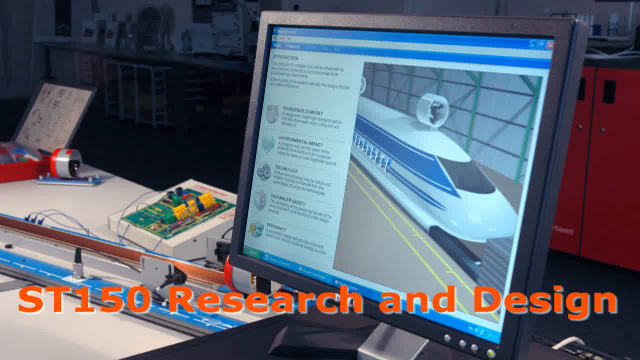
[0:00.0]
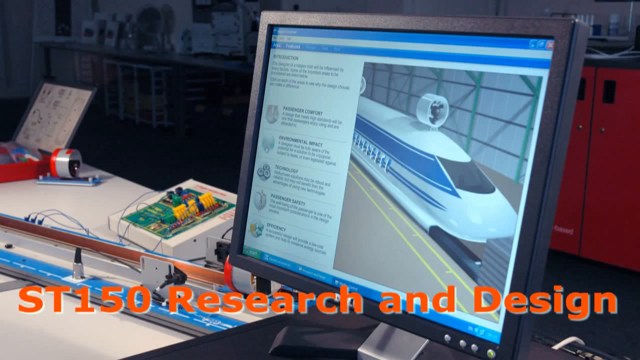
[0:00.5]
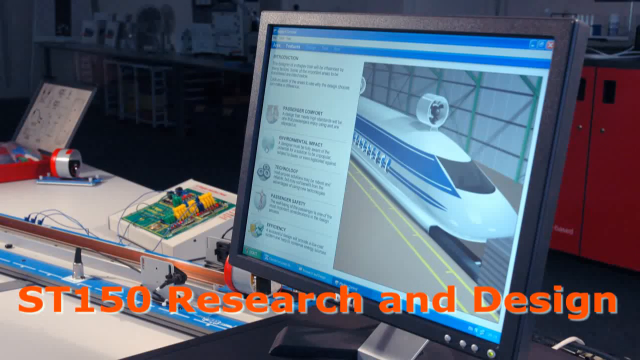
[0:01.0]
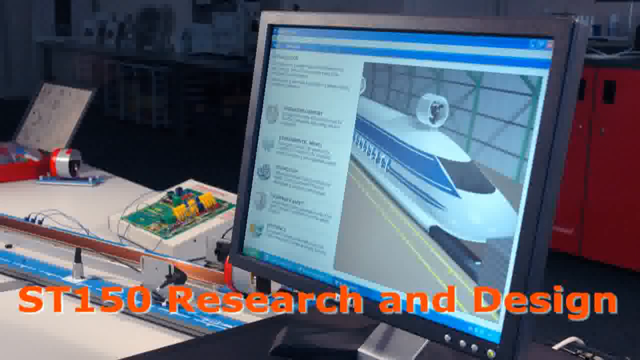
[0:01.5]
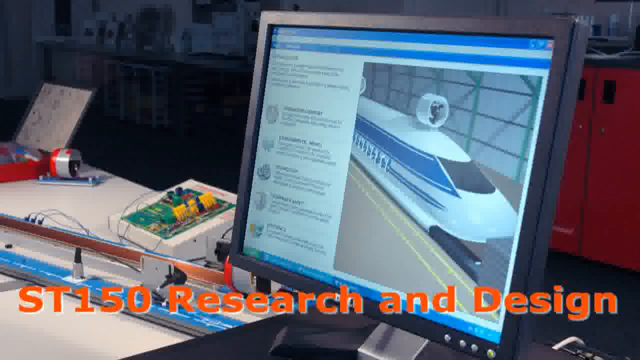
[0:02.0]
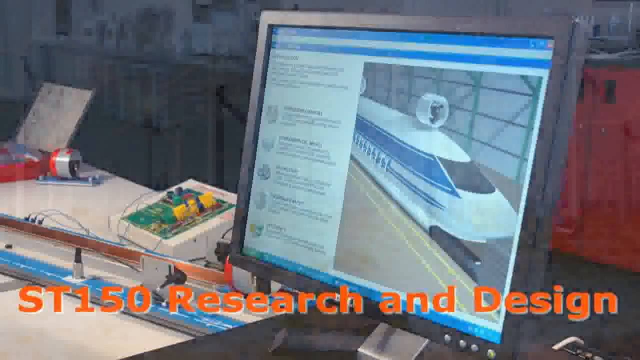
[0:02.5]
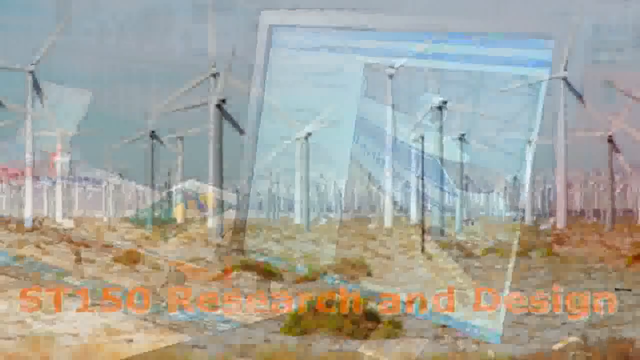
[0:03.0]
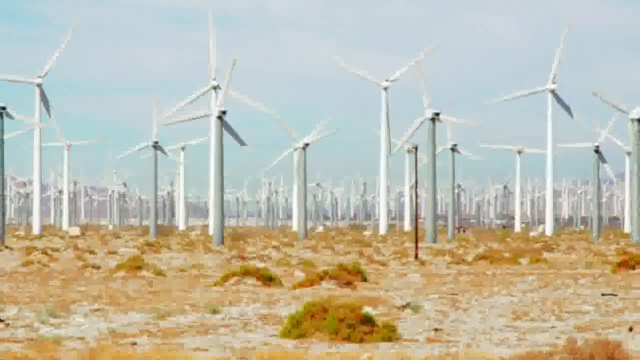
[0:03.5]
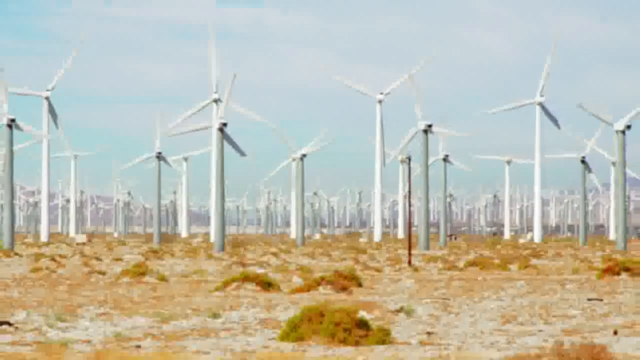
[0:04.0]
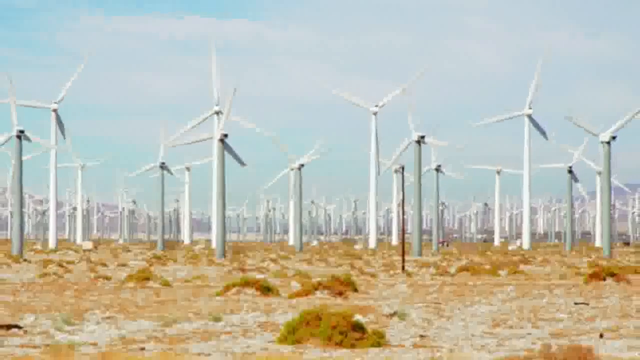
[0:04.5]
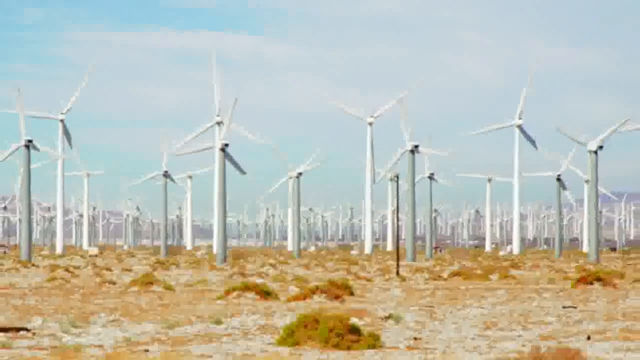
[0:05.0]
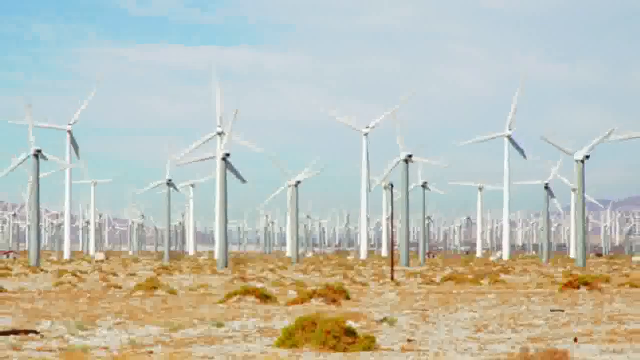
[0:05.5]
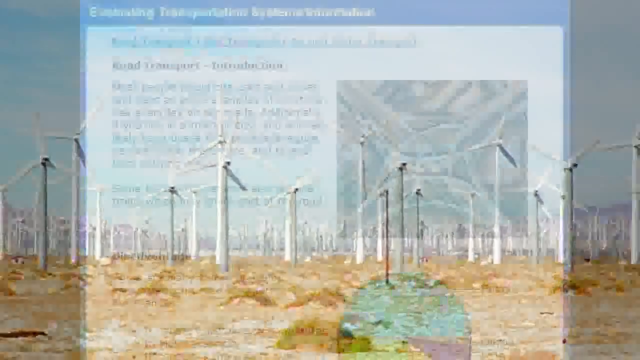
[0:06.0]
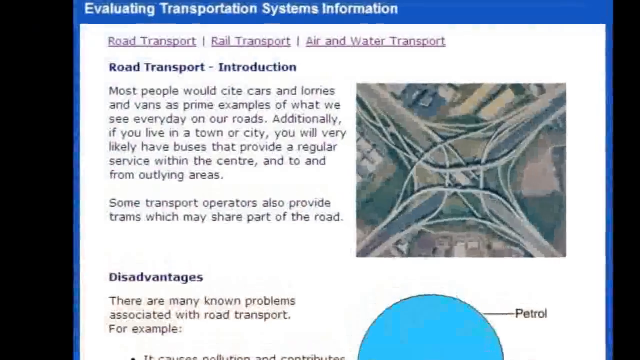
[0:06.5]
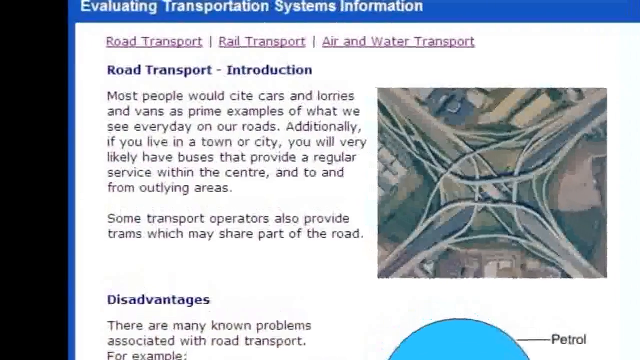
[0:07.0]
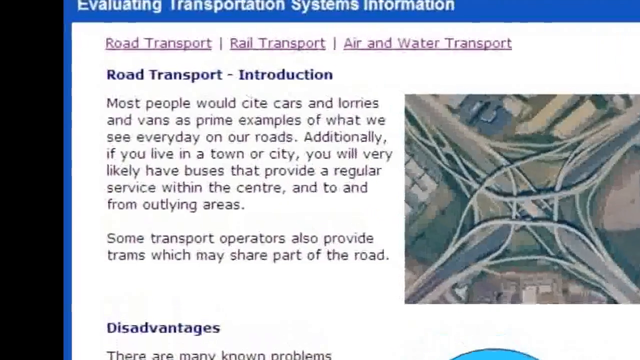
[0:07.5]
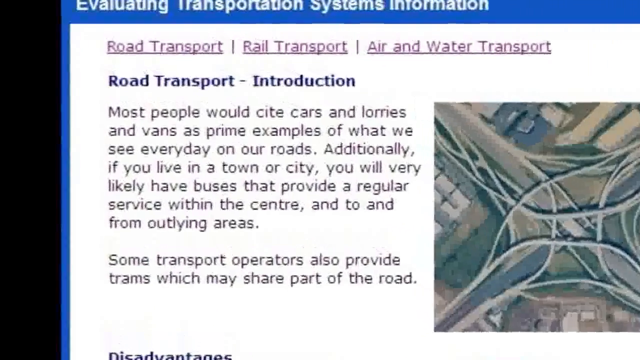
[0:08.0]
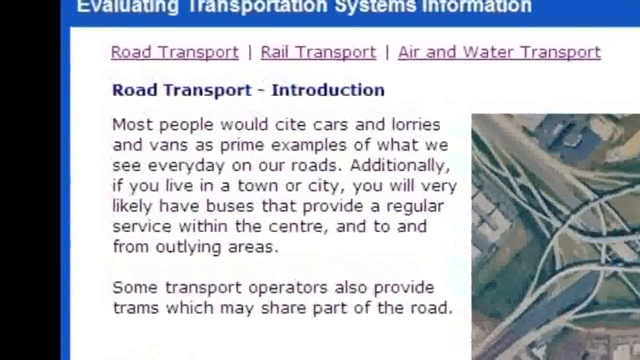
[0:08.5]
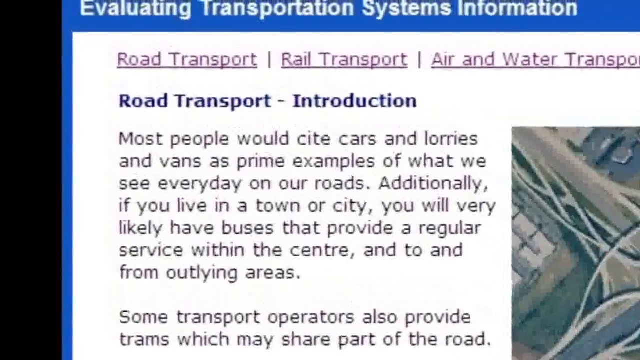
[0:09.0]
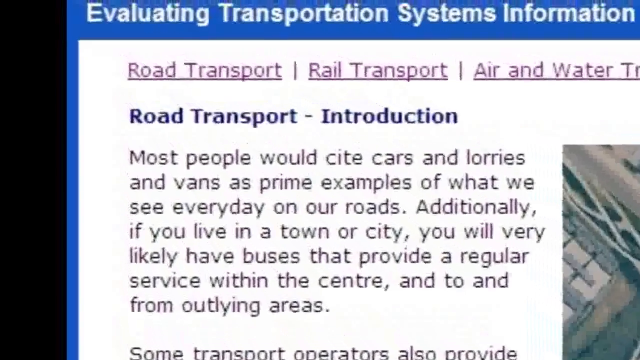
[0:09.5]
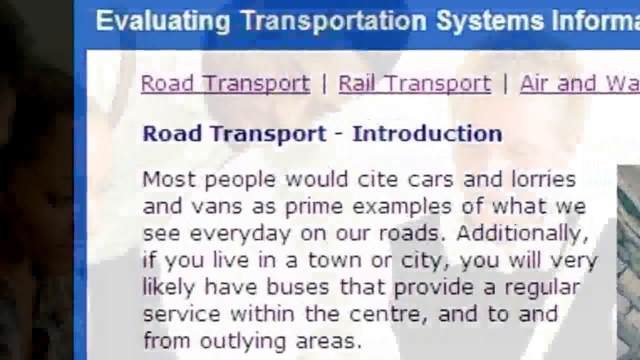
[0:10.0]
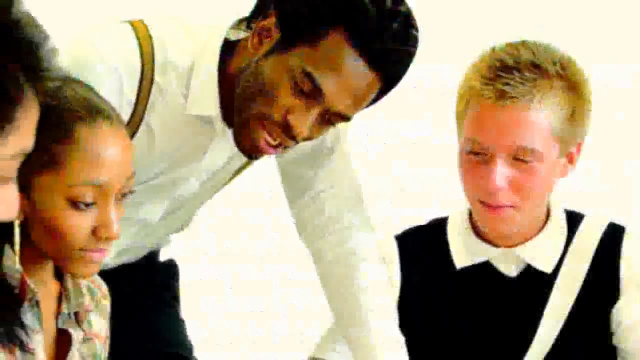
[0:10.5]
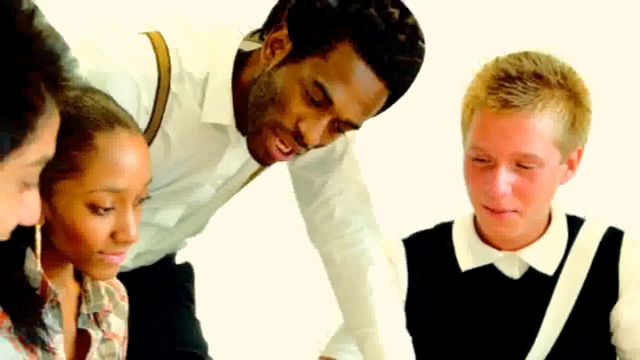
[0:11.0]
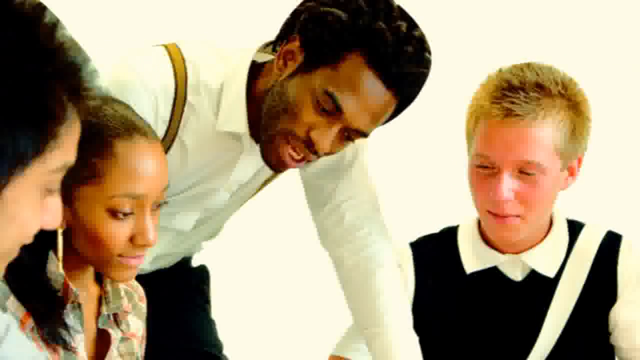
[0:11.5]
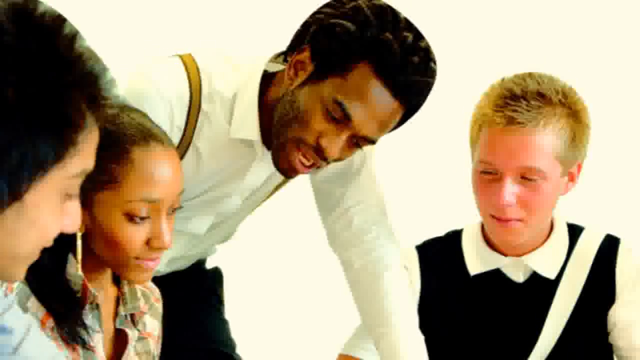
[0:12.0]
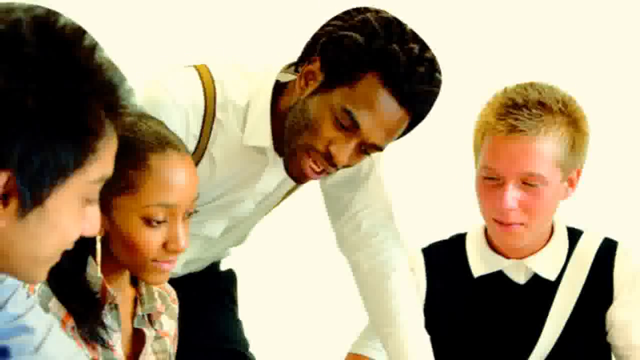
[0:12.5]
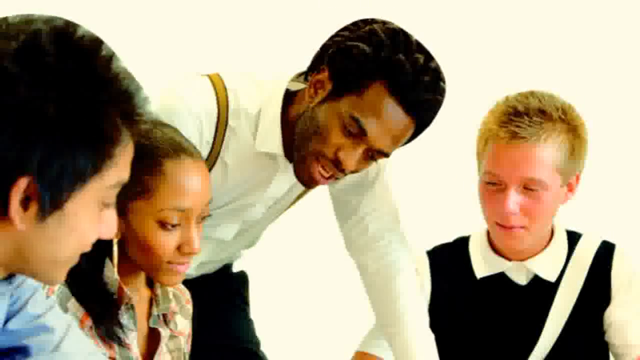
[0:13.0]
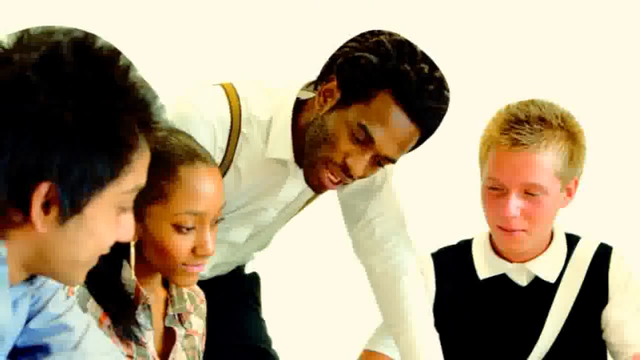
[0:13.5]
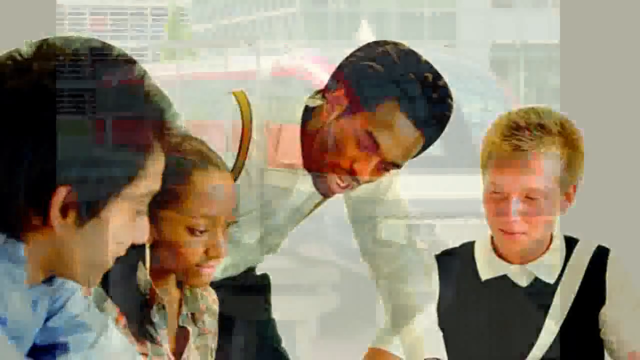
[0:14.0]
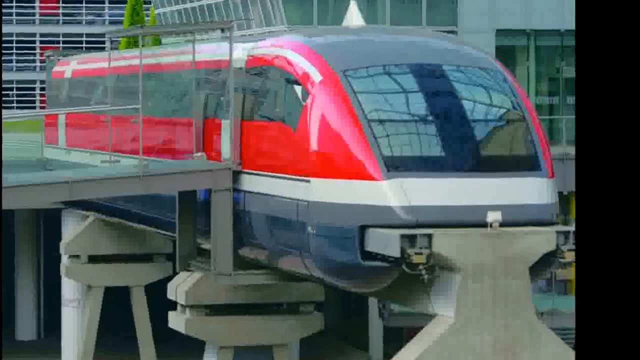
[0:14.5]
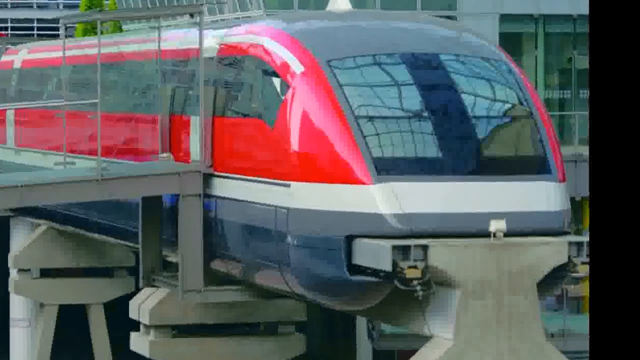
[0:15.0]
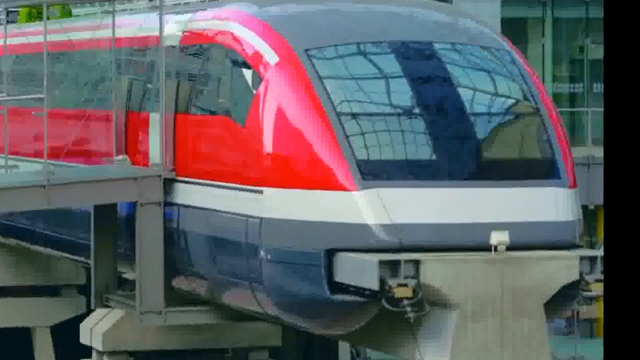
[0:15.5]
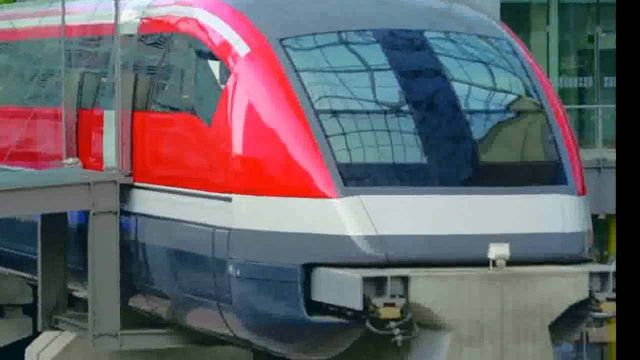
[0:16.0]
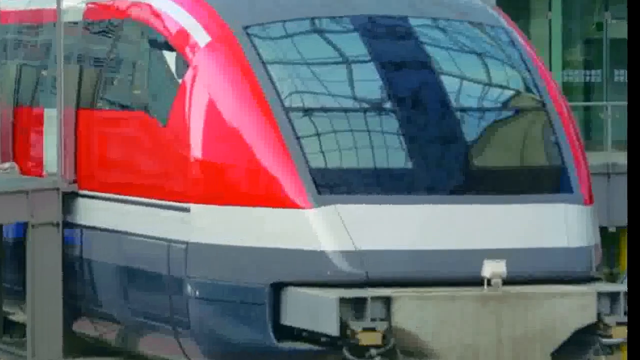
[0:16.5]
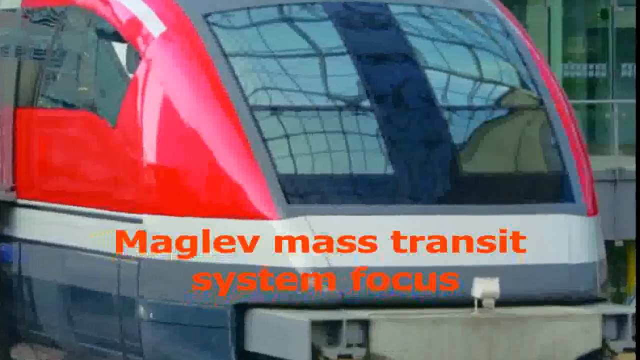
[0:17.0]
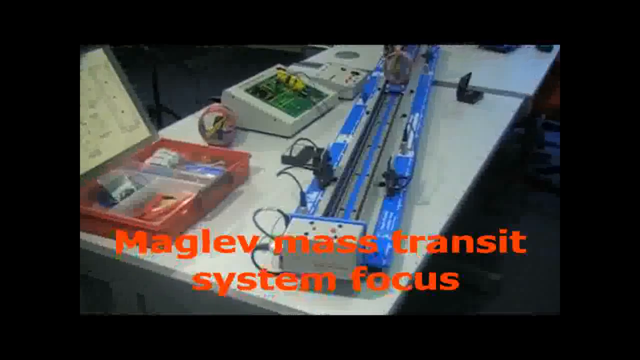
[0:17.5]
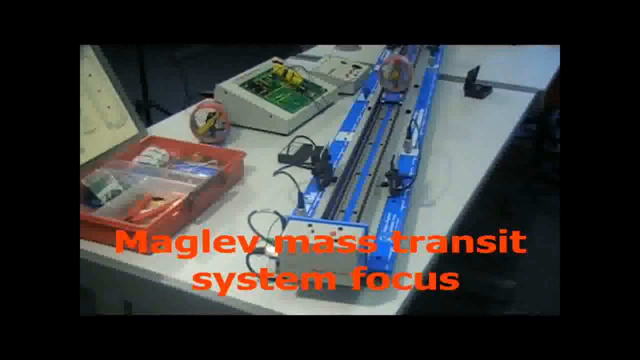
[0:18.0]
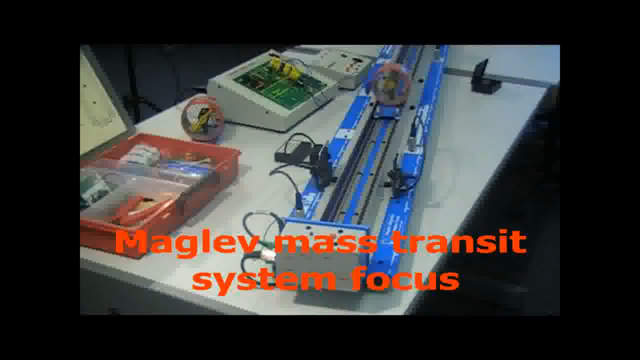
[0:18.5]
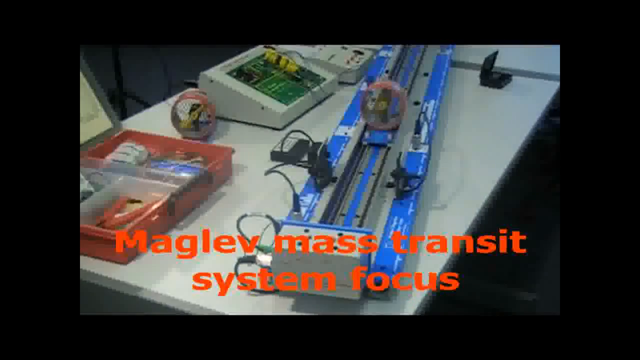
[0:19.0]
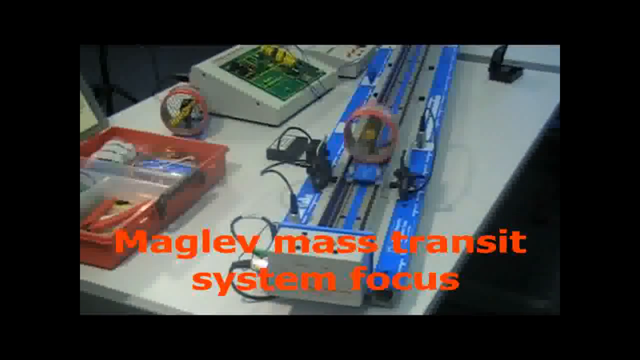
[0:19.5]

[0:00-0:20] The video opens on an image of a desktop computer monitor on the right-hand side of the frame. It has a thick black case and appears to be showing a website with an image of a train of some sort. Across the bottom of the screen, orange text reads "ST150 Research and Design". The computer is on a desk covered with various electronic paraphernalia, and a red cabinet and a grey workbench are visible in the background. The image changes to a still picture of some wind turbines, which the view zooms out from, before zooming in on an image about evaluating transportation systems information, zooming into a section that says "road transport". It then zooms out of an image of a man teaching some children before zooming into an image of a train. Large orange writing says "Maglev mass transit system focus". The same shot of the desk the laptop was on, with the electronic paraphernalia, is shown, and some kind of machinery, apparently showing how the train works, runs across it towards the camera from the right-hand side to the left-hand side of the desk.